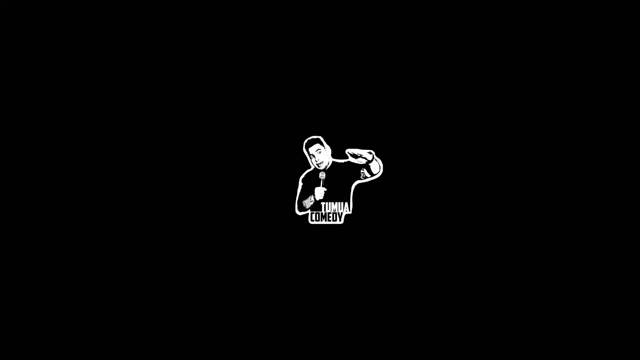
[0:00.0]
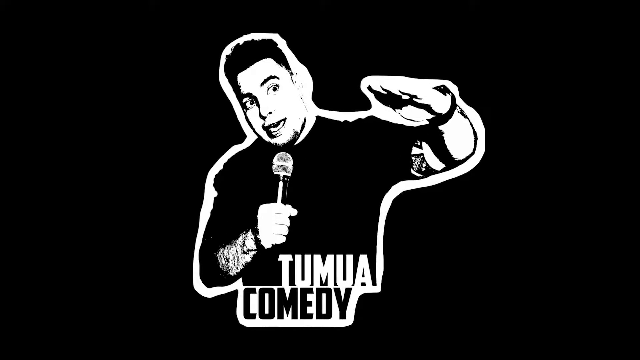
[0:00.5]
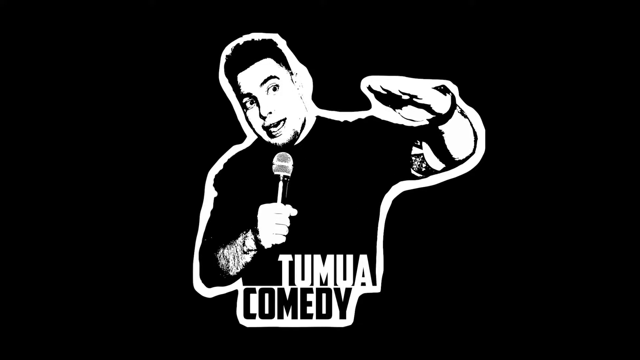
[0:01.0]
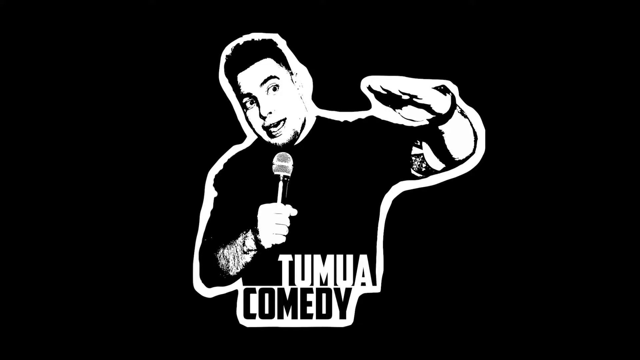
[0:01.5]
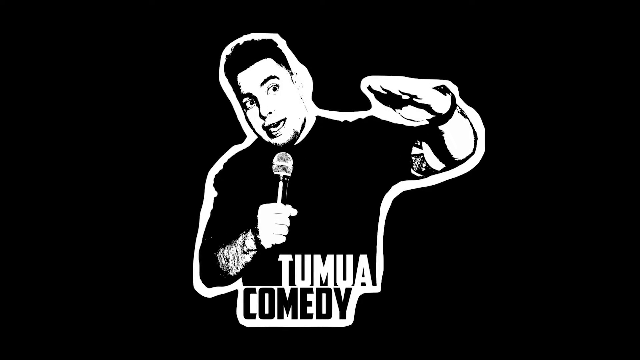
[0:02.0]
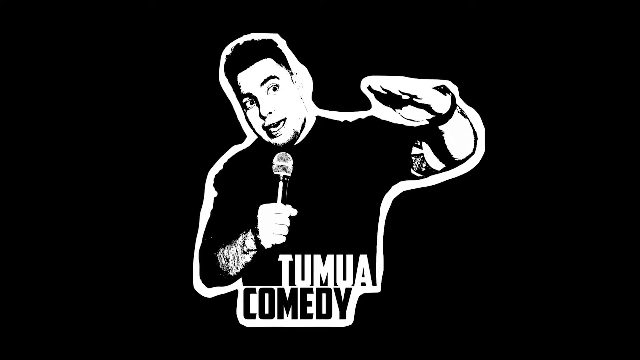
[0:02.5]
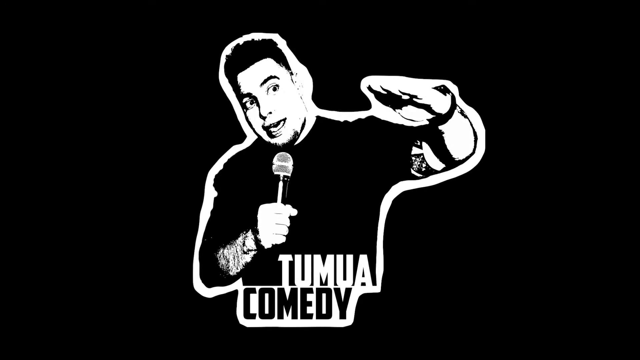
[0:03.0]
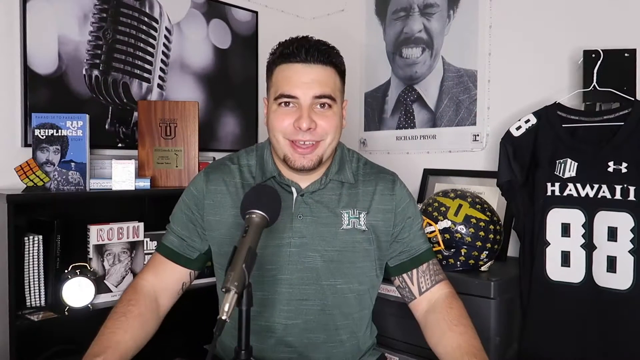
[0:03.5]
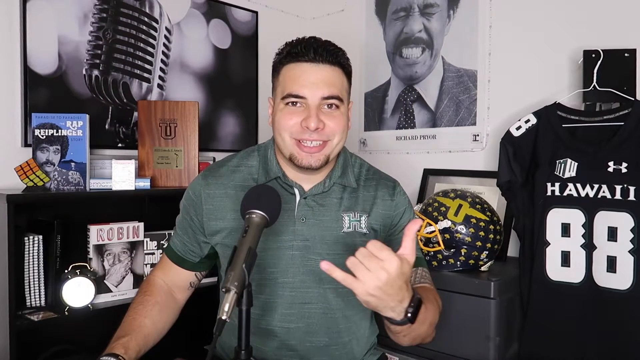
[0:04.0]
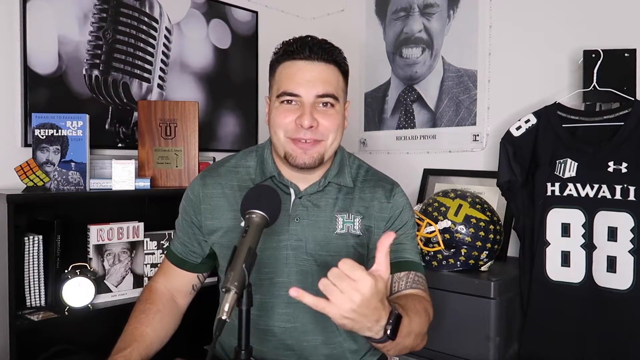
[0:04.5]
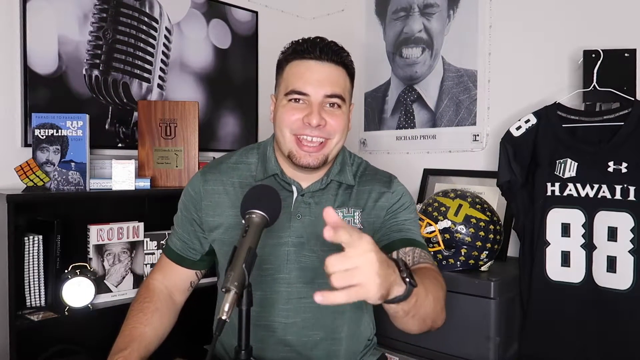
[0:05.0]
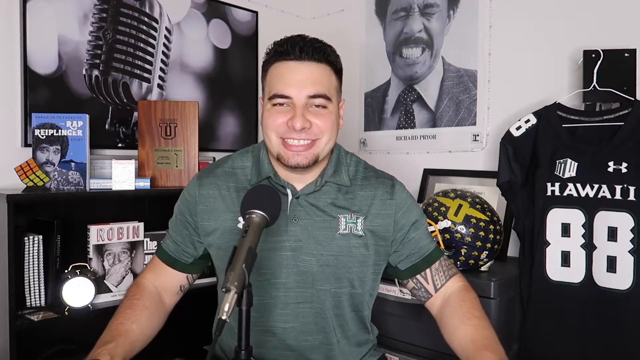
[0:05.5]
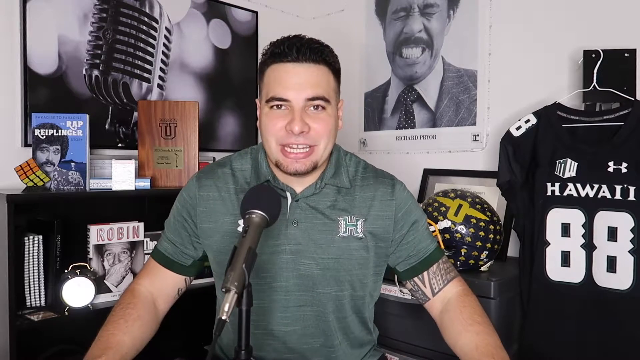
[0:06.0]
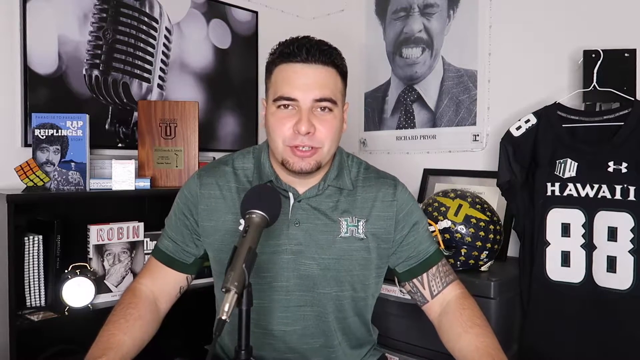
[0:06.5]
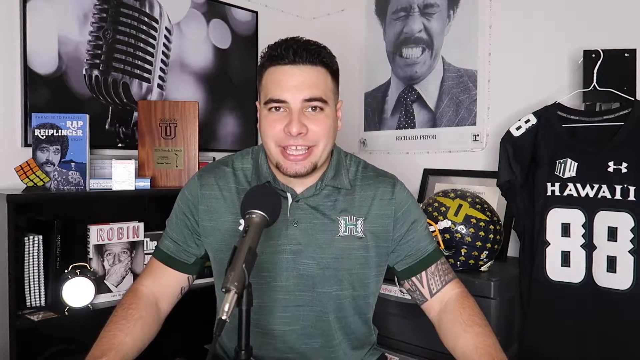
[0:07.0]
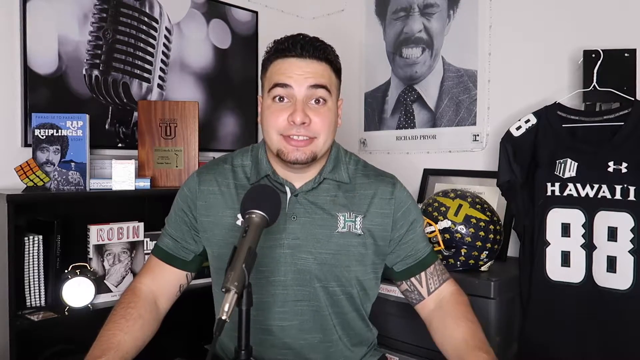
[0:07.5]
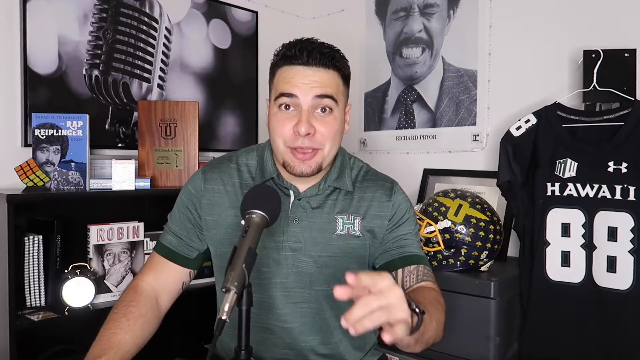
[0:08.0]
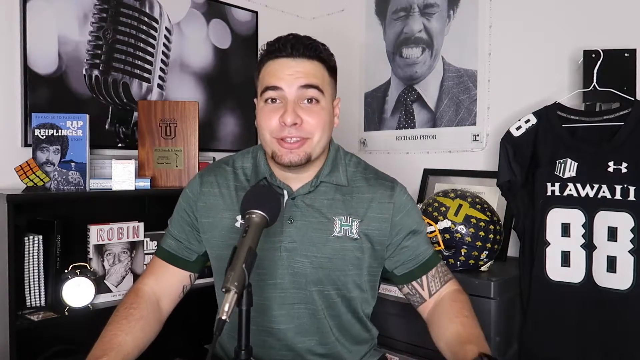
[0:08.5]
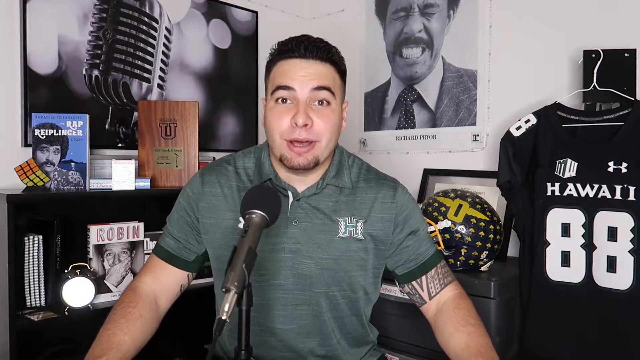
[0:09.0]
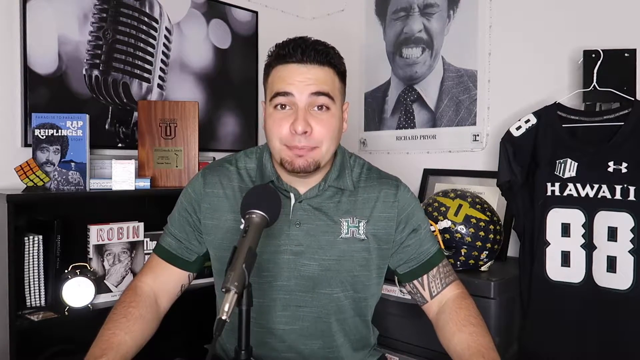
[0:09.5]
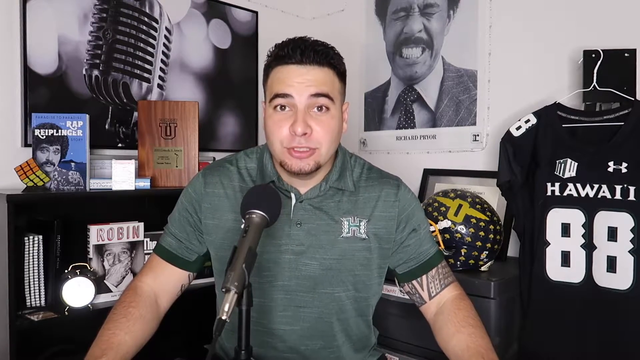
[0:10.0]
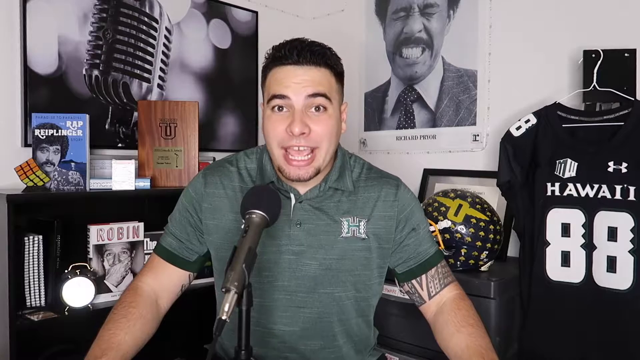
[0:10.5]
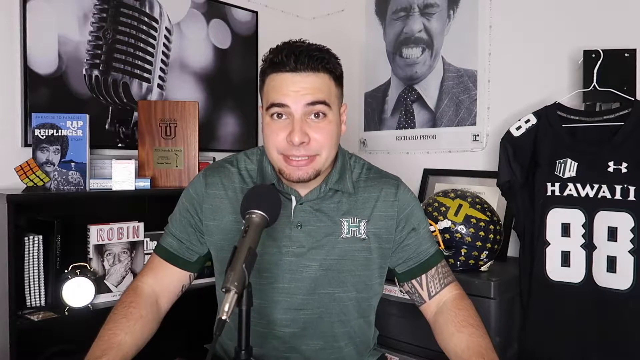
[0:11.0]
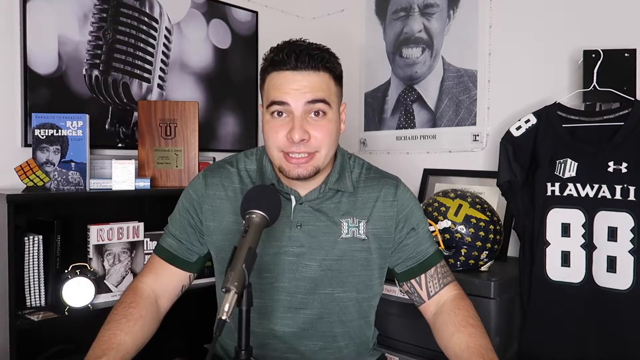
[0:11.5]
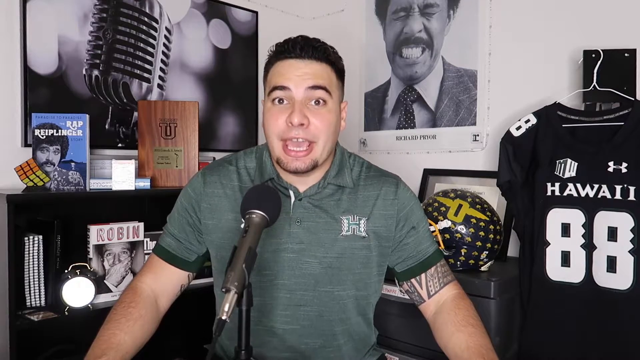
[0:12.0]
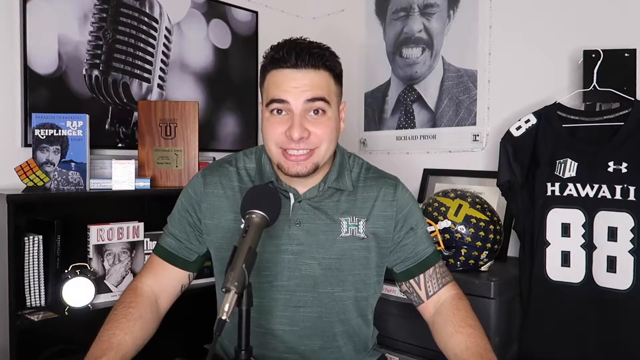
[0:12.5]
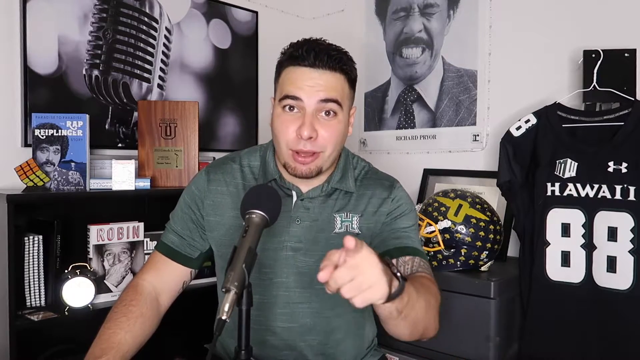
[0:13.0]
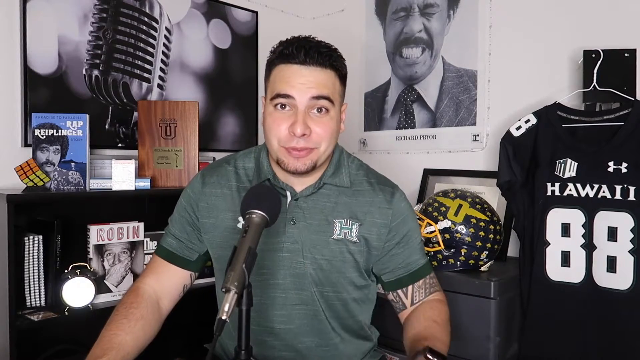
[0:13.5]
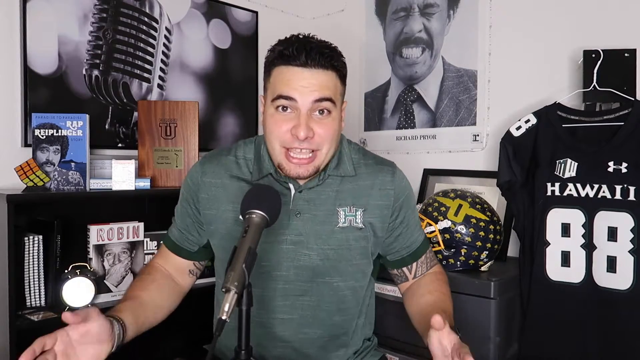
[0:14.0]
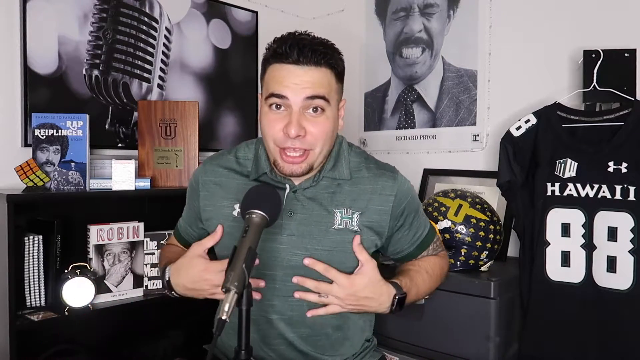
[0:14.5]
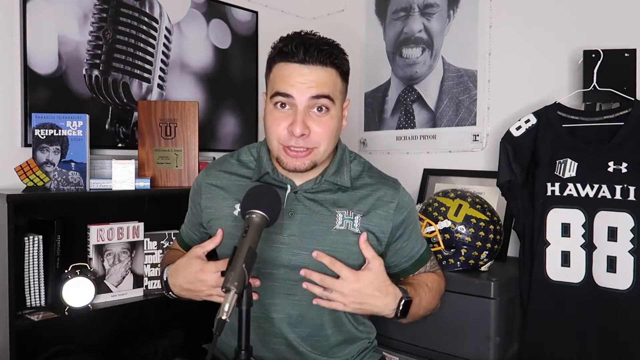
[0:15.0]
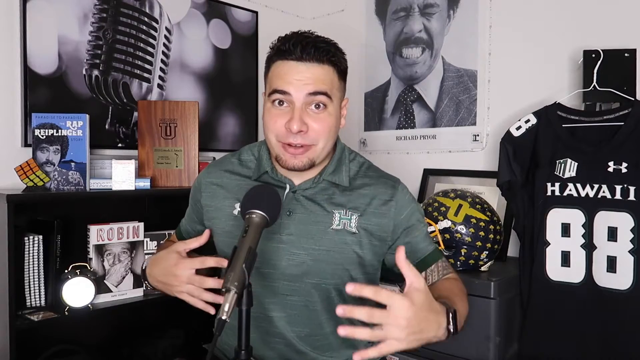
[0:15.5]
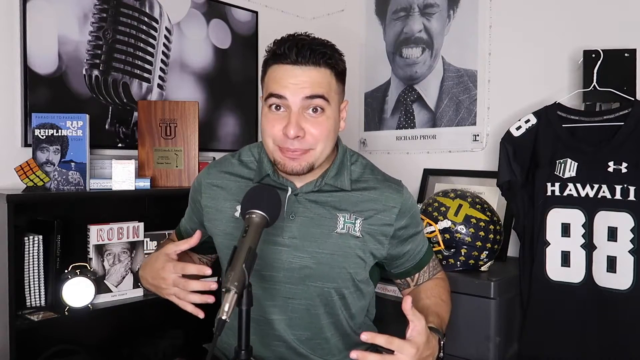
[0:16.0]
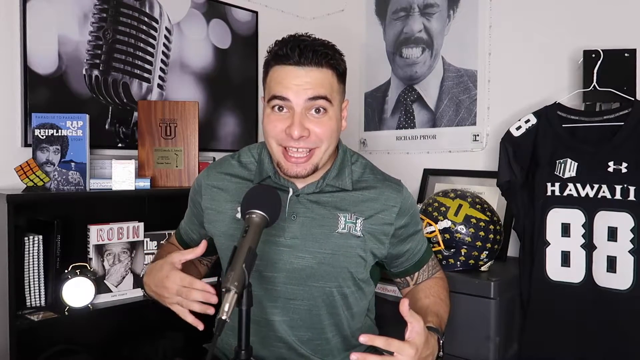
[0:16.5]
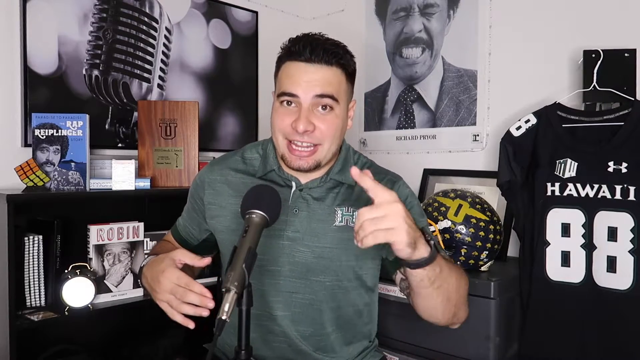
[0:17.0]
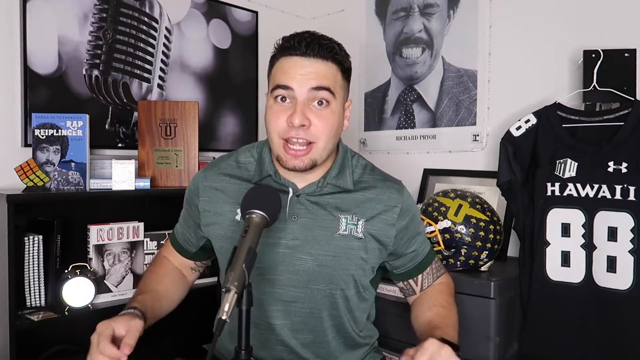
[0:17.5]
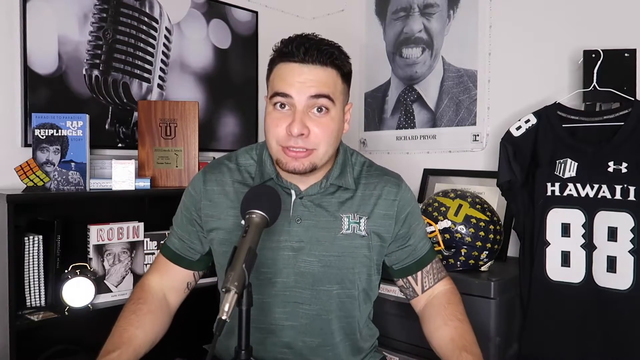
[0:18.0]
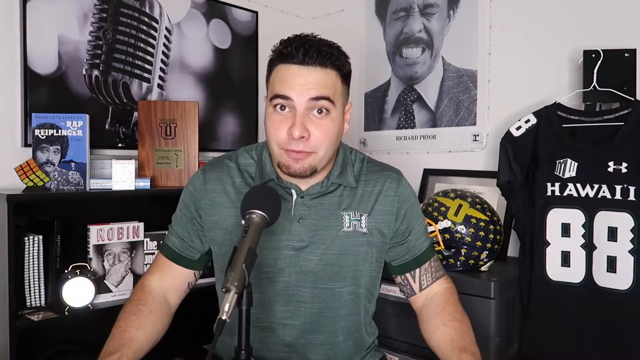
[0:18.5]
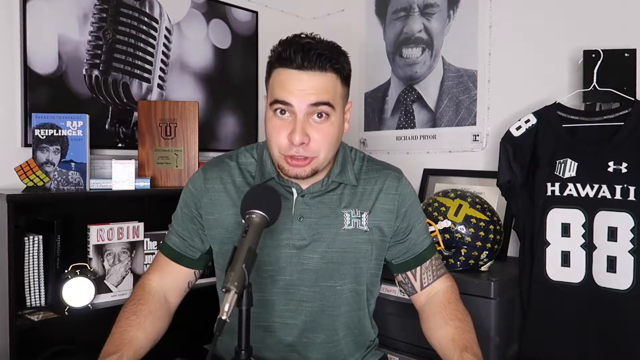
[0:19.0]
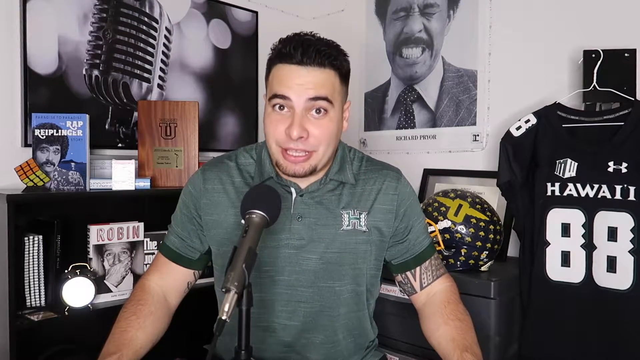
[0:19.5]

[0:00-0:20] The video opens on a black-and-white cartoon image of a man with short hair, his left arm raised in the air (on the right from the viewer's perspective) and a microphone in his other hand. Black and white text at the bottom reads "Tuma Comedy", apparently his name followed by the word comedy. The small cartoon grows larger on the screen and holds for a couple of moments, then the scene transitions to the same man in reality, sitting in front of a microphone in his room in a green shirt, holding up a horns gesture with his hand to the camera. He points at the camera, smiles and raises his eyebrows, lifting his arm several times as he speaks directly to the viewer, apparently making some sort of YouTube-style video.